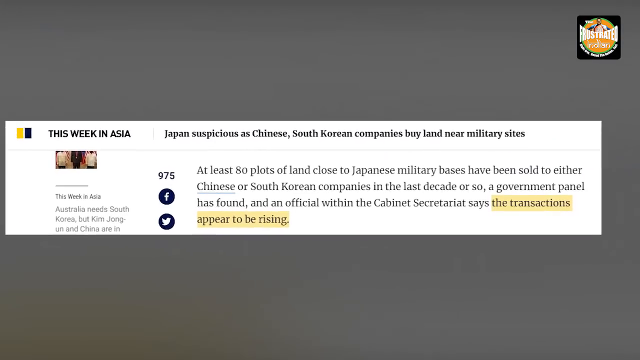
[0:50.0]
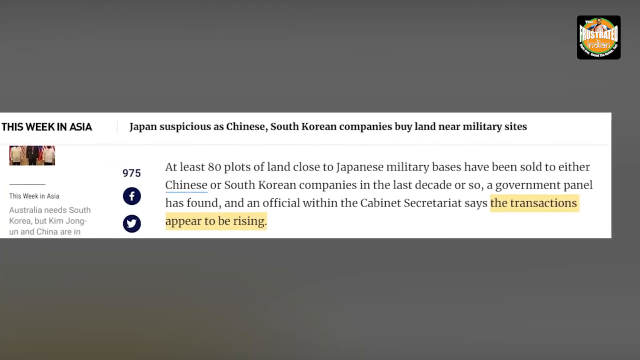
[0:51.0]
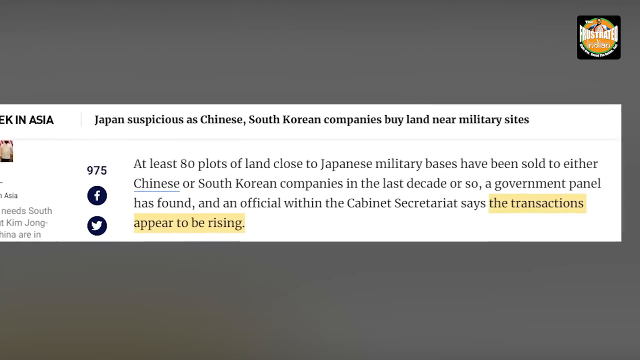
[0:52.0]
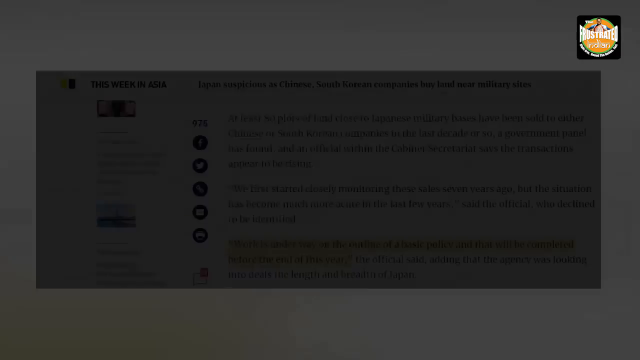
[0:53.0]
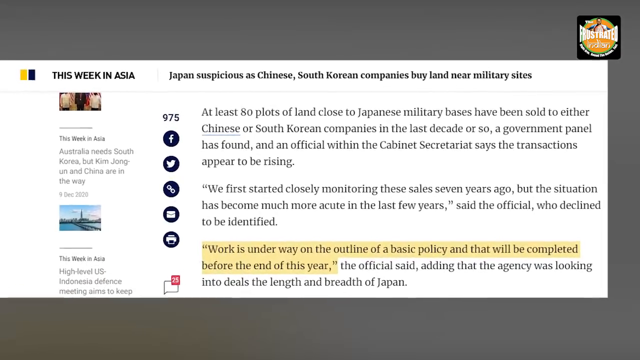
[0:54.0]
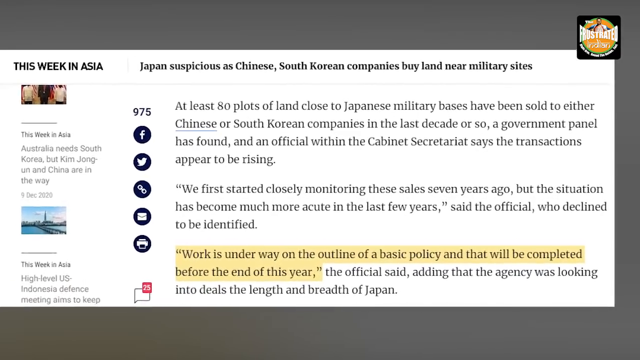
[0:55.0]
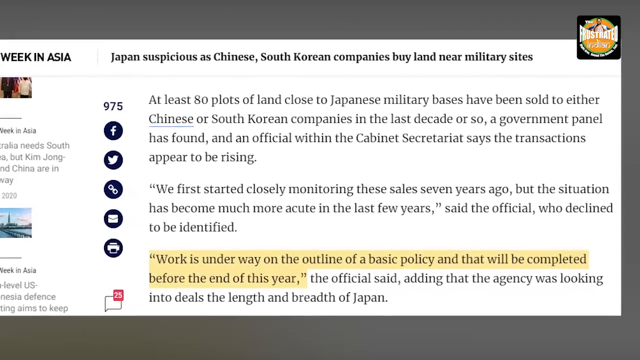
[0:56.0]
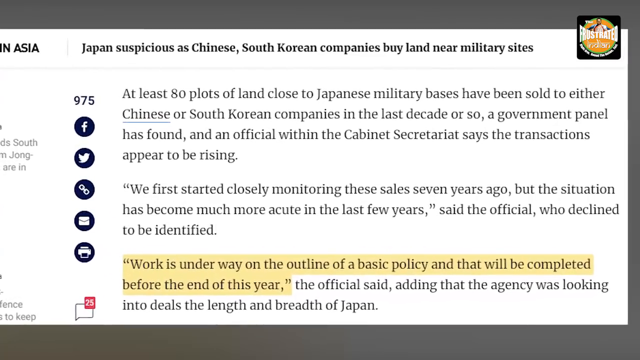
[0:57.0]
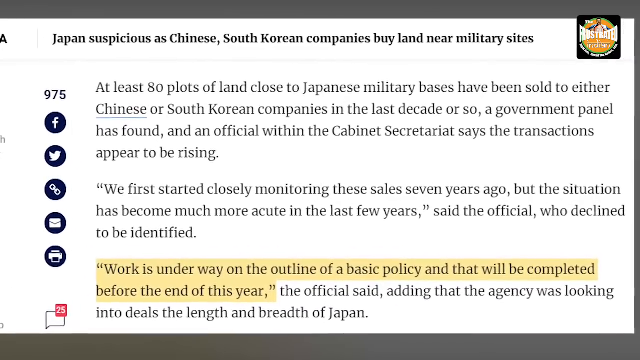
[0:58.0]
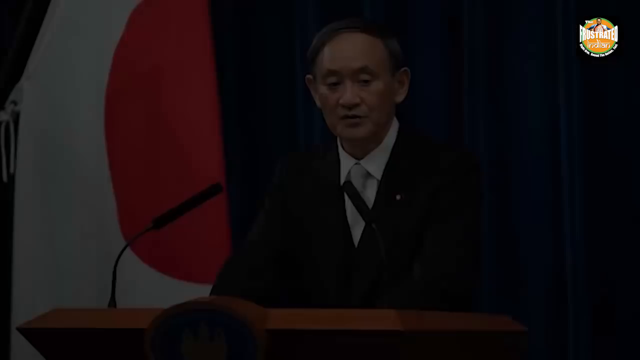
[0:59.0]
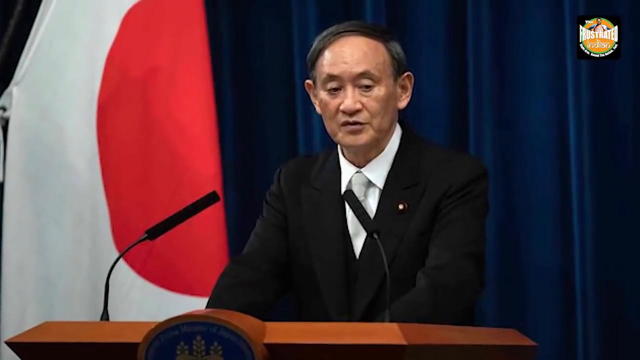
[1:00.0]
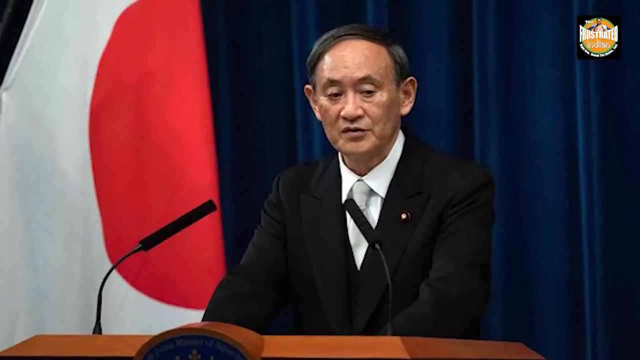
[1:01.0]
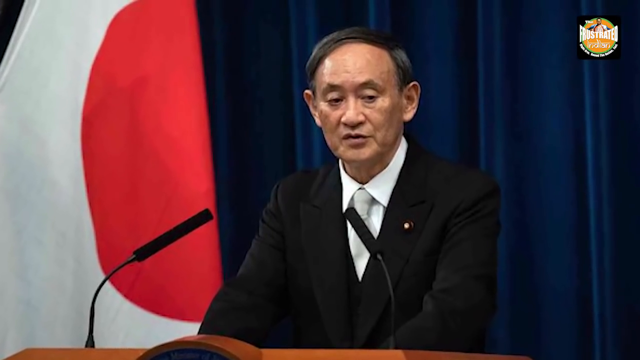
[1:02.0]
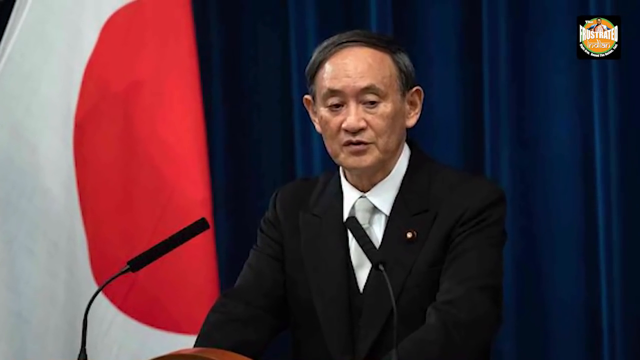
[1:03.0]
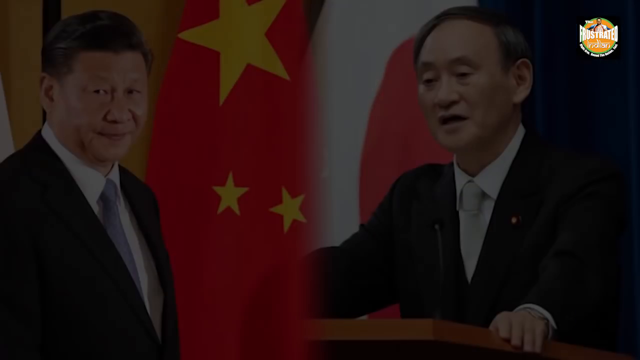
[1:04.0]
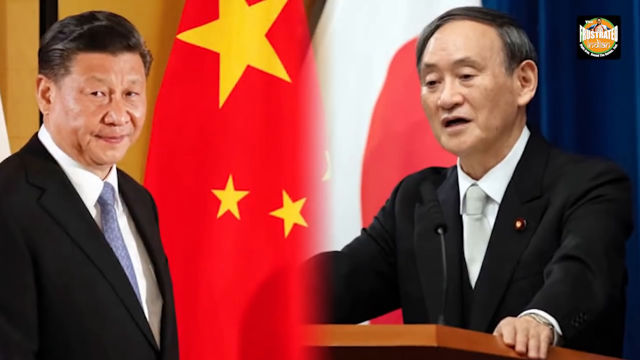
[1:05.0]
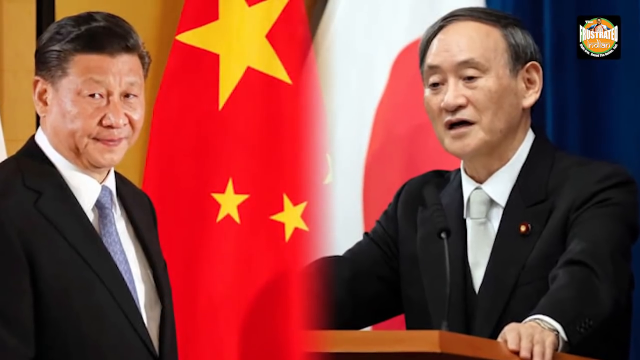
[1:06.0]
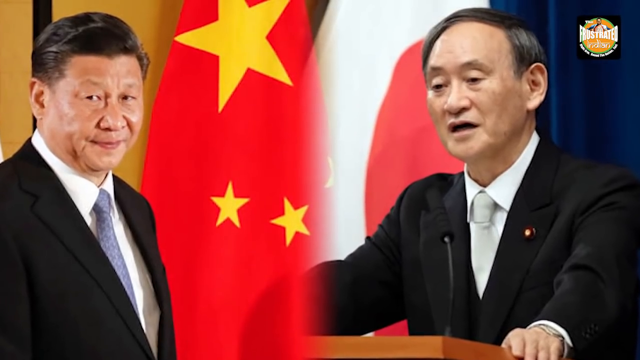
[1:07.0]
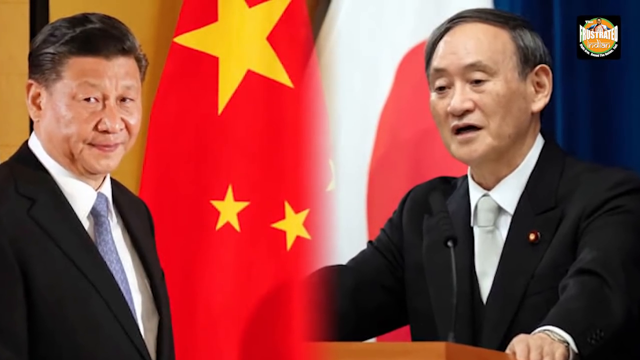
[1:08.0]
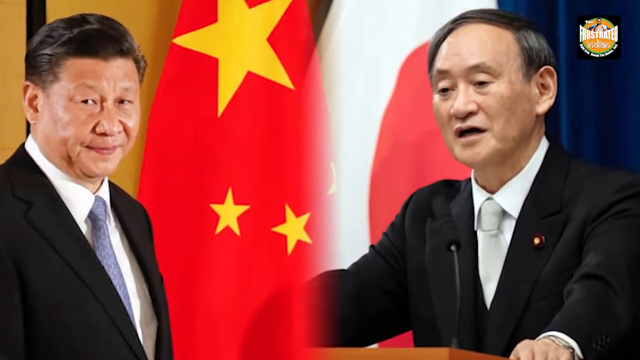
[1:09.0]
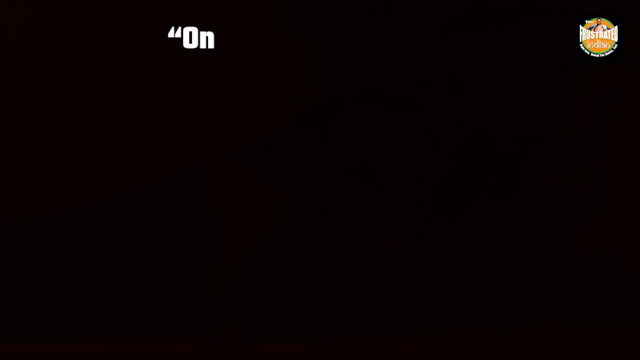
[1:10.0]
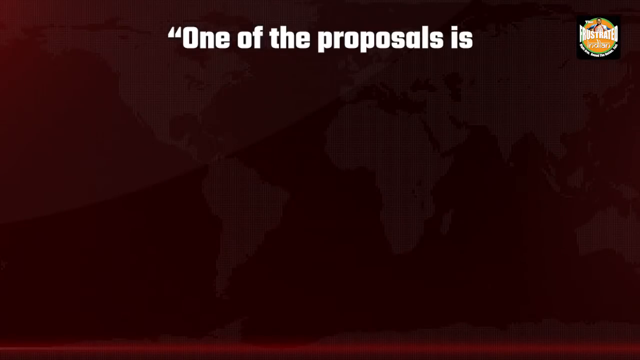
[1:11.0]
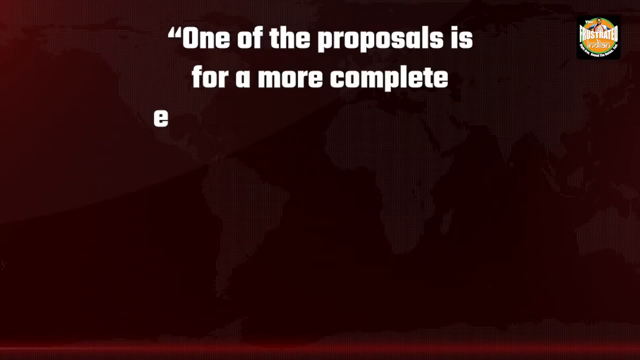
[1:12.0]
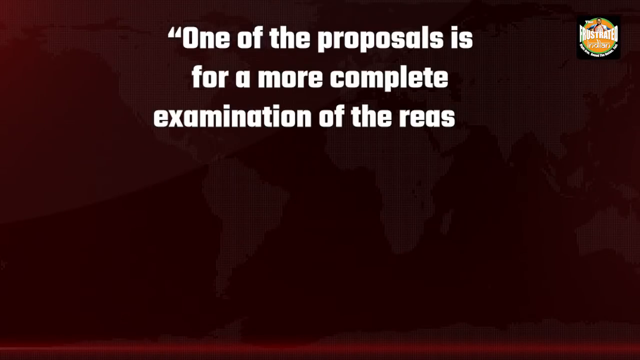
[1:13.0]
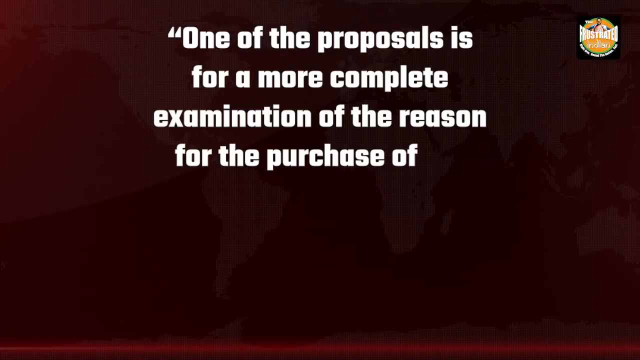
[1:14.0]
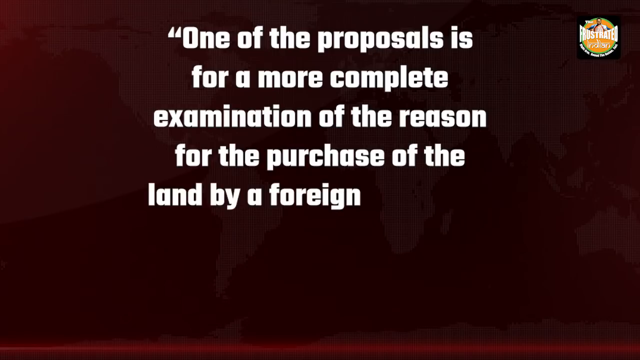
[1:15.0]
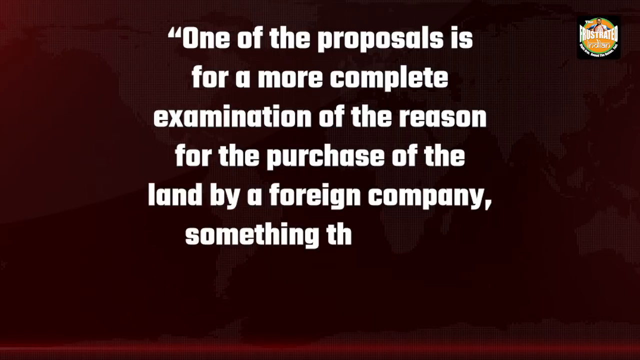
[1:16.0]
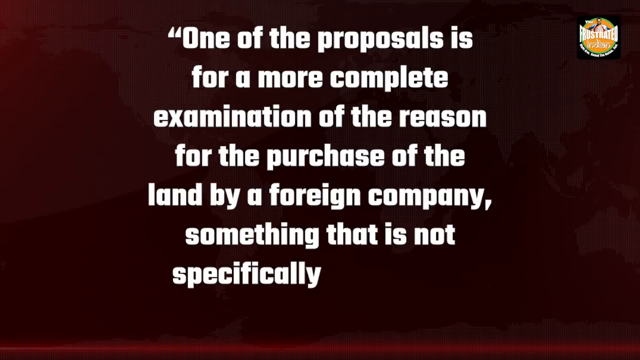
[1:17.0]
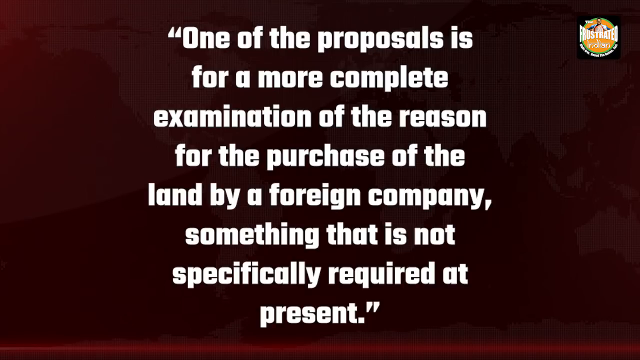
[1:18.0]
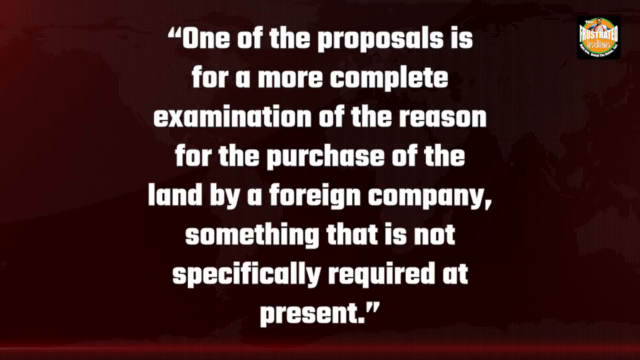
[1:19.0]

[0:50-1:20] A small white rectangle on a gray background contains words and what looks like a portion of a newspaper article, with black text on white. Some words are highlighted, appearing black on a yellow background. Then a second article is shown, also framed inside a white square on a gray background, with black letters on white; a portion of it is highlighted in yellow with black letters. Next, a photo shows a man in elegant clothes: a black jacket, a white shirt and a very light tie. Behind him there is a red and white flag and a dark blue tent.